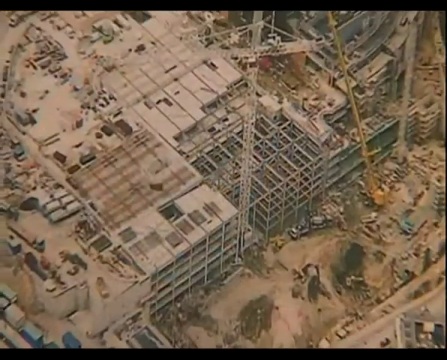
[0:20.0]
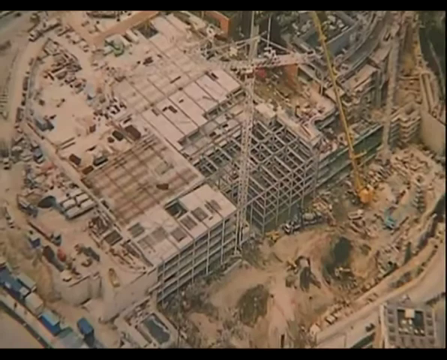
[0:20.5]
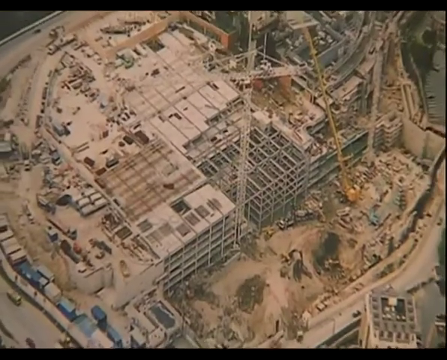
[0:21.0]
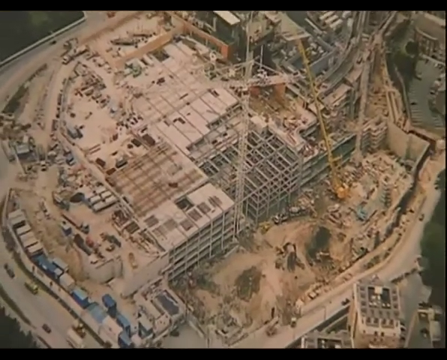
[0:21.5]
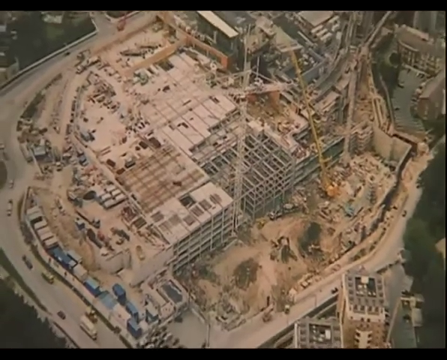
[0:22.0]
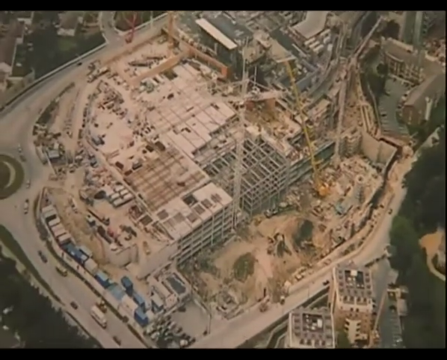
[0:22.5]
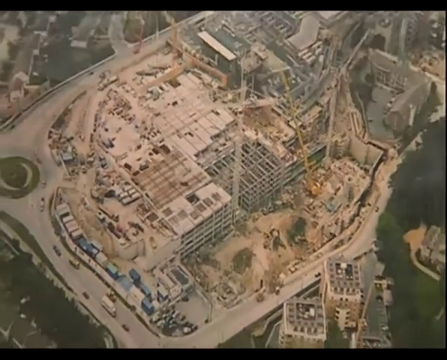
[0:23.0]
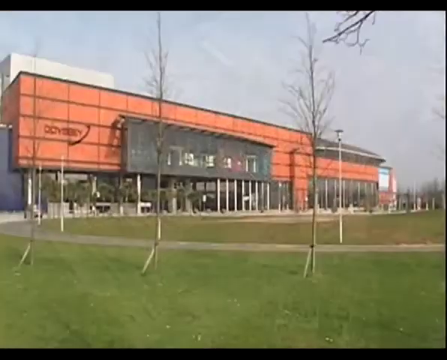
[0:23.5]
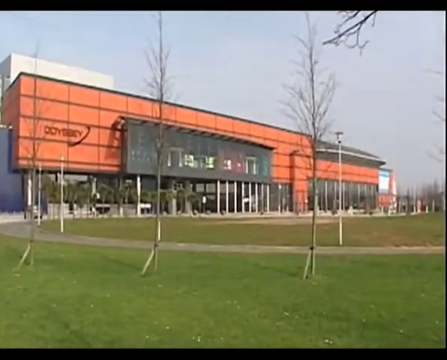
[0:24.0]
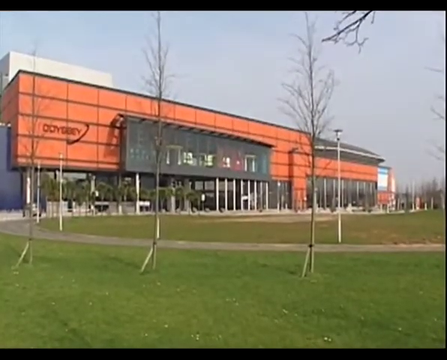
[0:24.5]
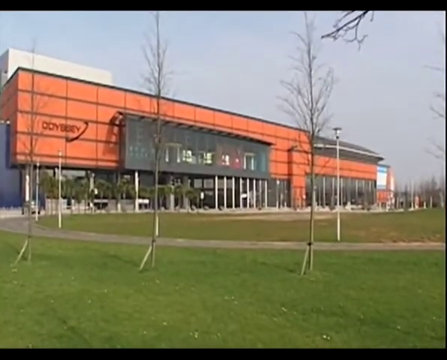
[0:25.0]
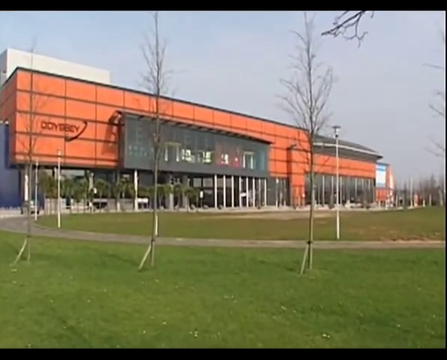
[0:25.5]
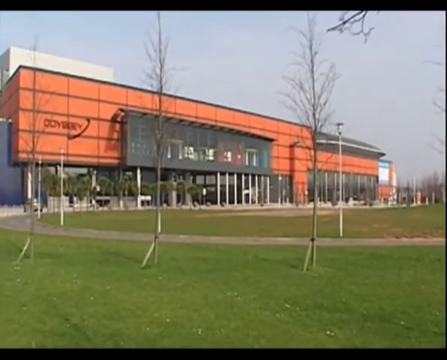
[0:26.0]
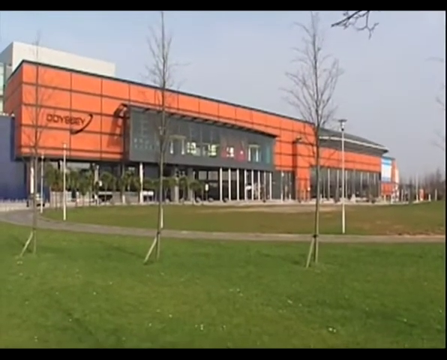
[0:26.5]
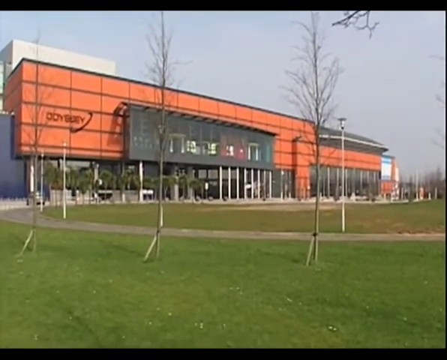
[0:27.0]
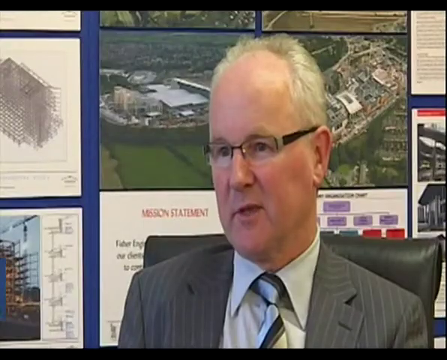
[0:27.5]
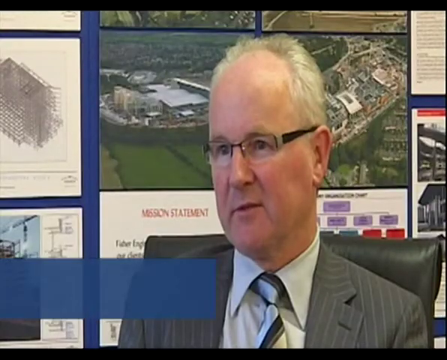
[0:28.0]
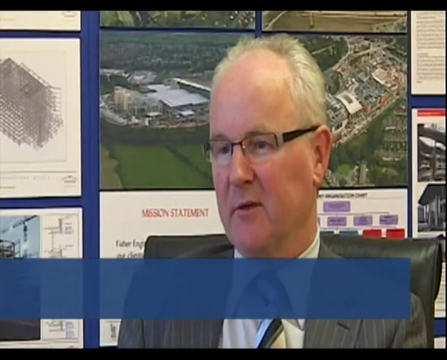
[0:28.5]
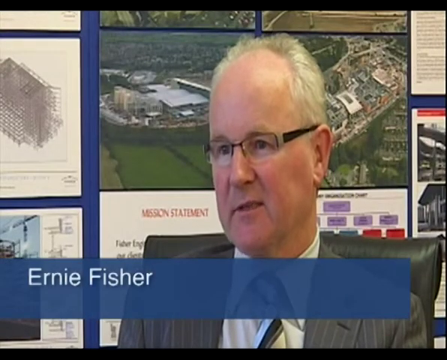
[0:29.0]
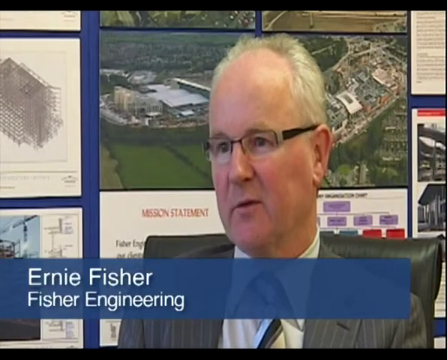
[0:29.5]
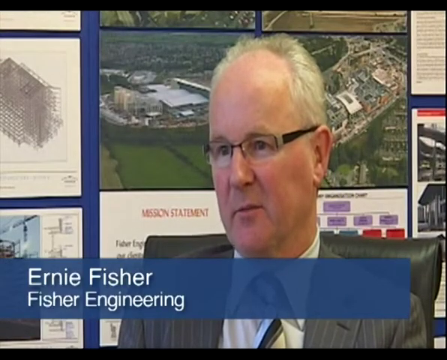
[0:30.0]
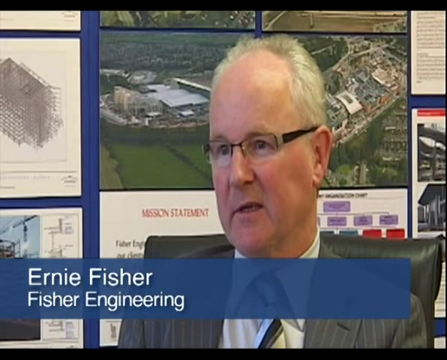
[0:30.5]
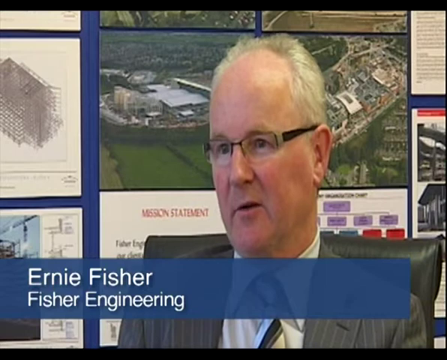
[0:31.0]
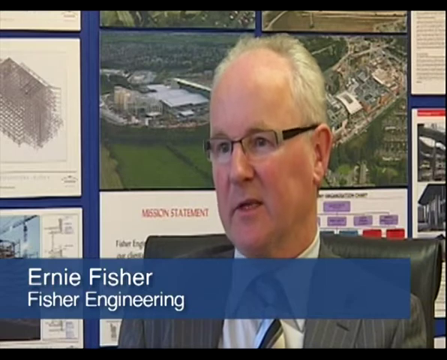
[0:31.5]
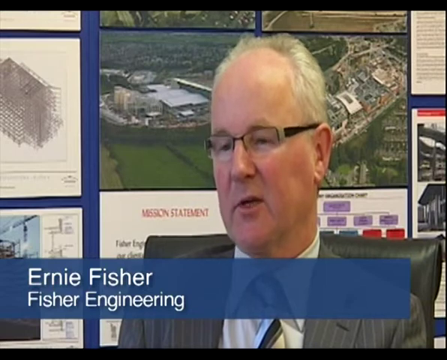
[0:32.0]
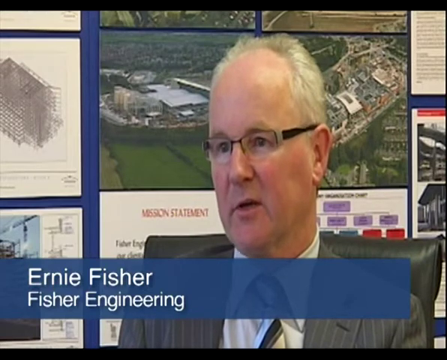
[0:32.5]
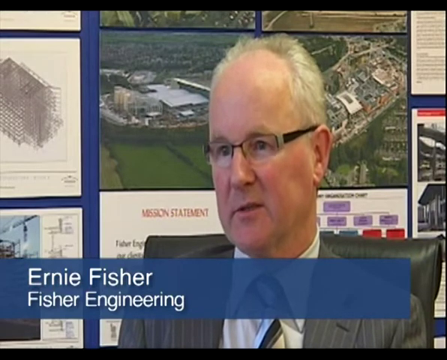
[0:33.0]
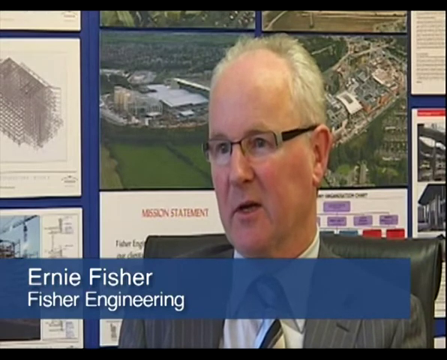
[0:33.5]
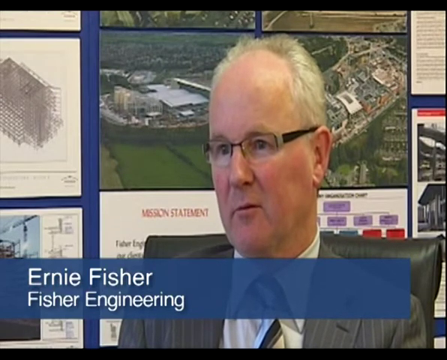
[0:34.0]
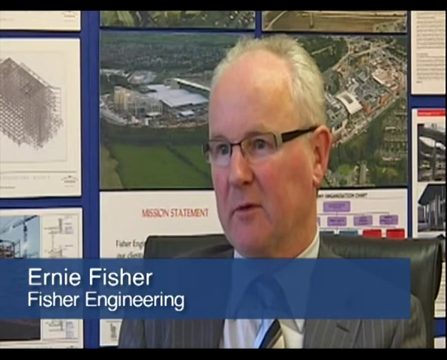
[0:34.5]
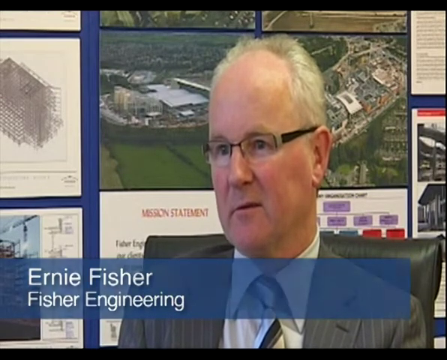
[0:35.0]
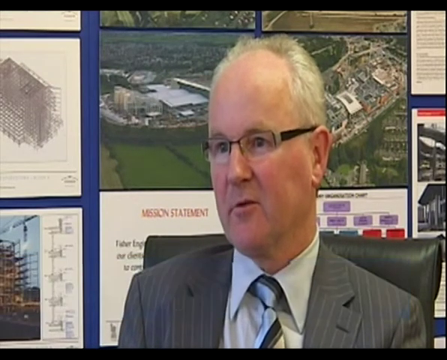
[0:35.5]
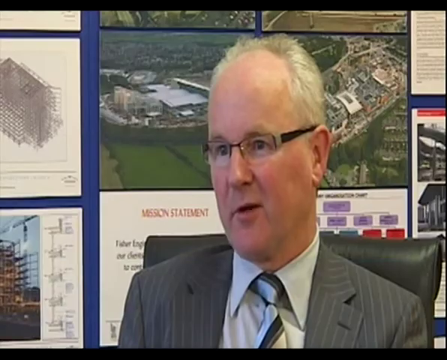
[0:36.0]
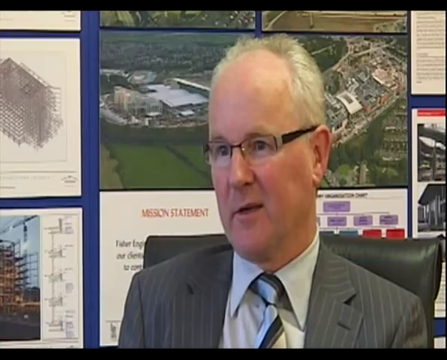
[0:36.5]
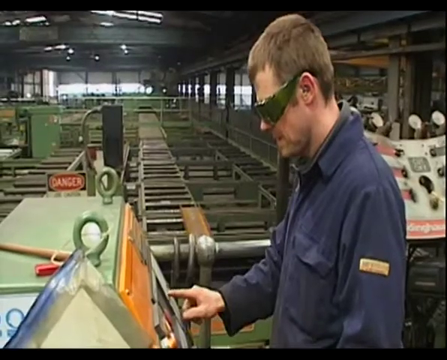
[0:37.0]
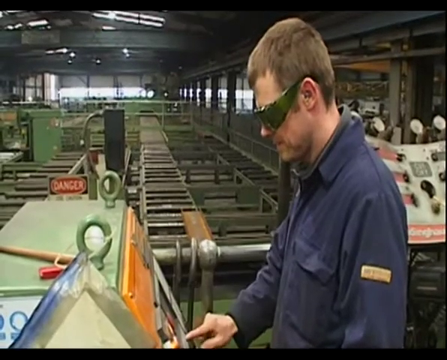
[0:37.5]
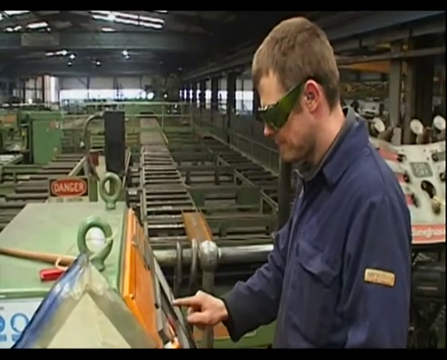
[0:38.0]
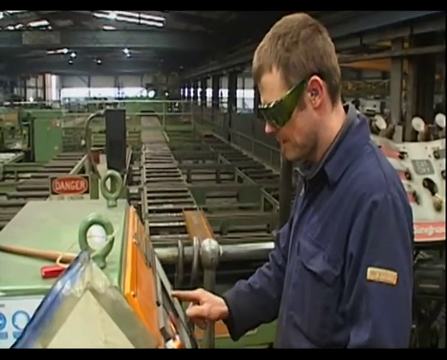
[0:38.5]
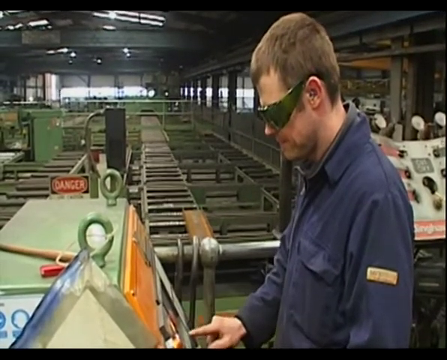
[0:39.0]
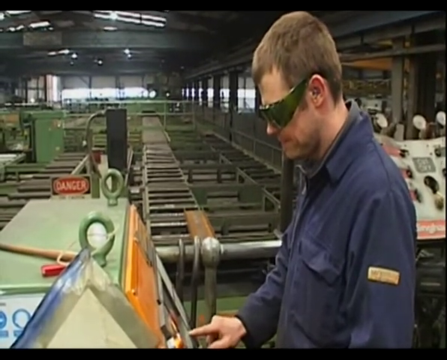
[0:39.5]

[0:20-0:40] What looks like an aerial view looks downward on a building being constructed, with a large white crane in the middle and many metal beams. The view zooms out to show more of the picture, revealing another crane, this one yellow, and the site looks like it is surrounded by a lot of green. The video then changes to what looks like a video clip of the front of an orange building with tall glass, apparently in front of a green lawn. Next, apparently, a man is being interviewed. He is a Caucasian man, probably in his 60s or 70s, with glasses and short white hair, wearing a gray suit with white stripes, a white shirt, and a blue, black and white striped tie. He sits on a leather chair, facing the camera and a little to the left. A blue banner extends from the left to the right at the bottom, with white text that reads "Ernie Fisher, Fisher Engineering." The man talks and nods his head, seemingly giving an interview. The scene then changes to what looks like the inside of a warehouse, where a worker wears green goggles and what looks like a blue factory worker suit. He appears to press a button with his right index finger on a panel at the bottom left; it is a green machine that seems to have panels and buttons on it. In the background are many steel beams that look like the ceiling beams of a factory.